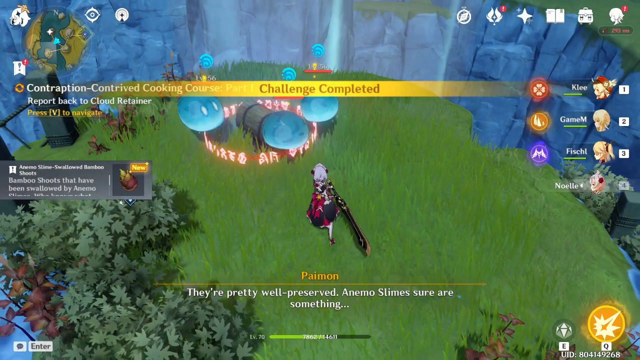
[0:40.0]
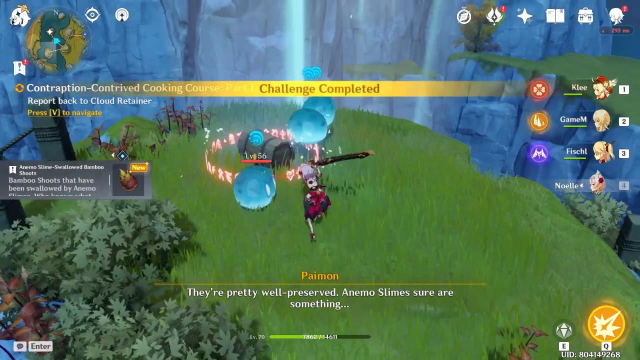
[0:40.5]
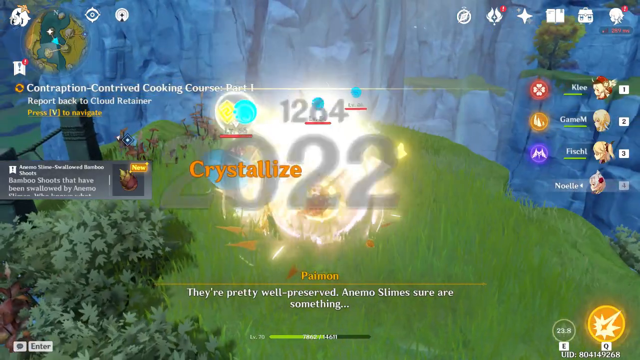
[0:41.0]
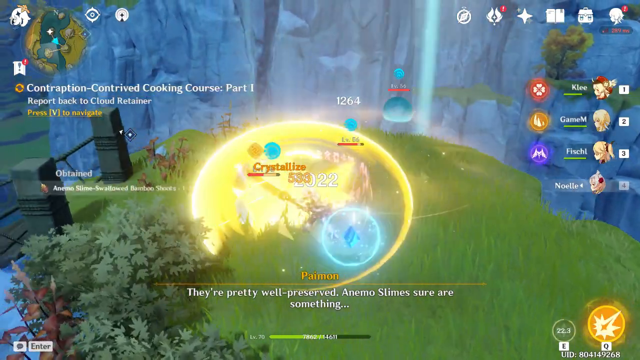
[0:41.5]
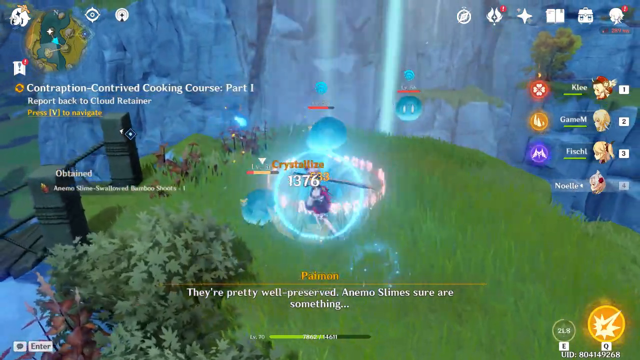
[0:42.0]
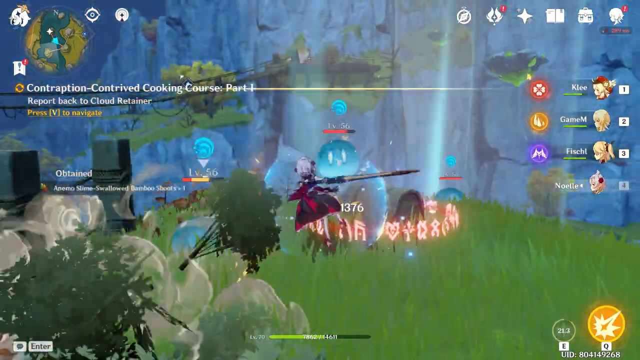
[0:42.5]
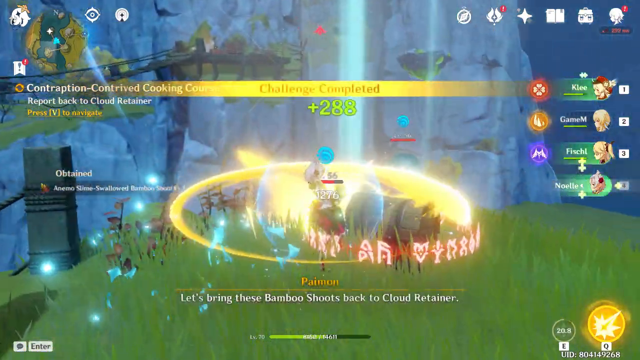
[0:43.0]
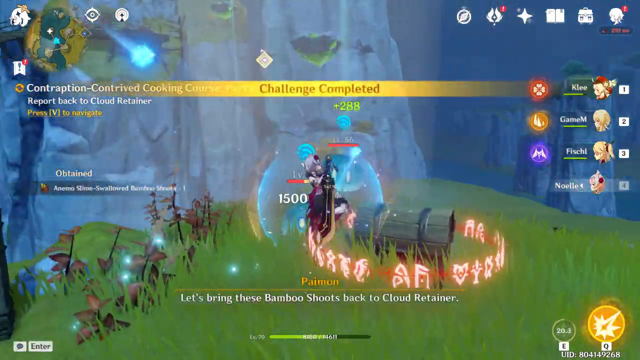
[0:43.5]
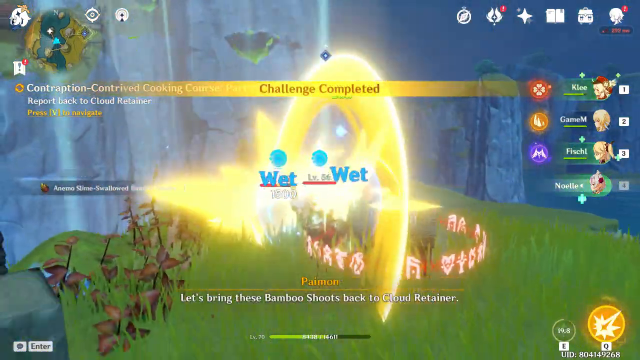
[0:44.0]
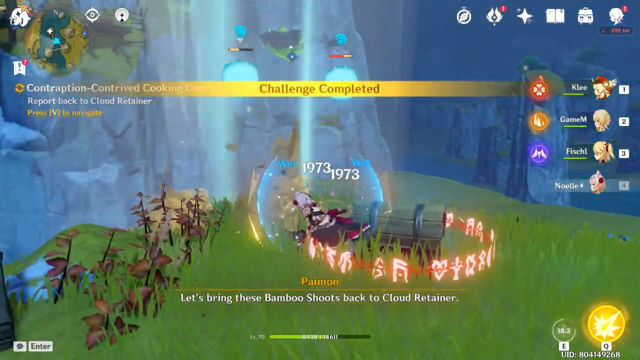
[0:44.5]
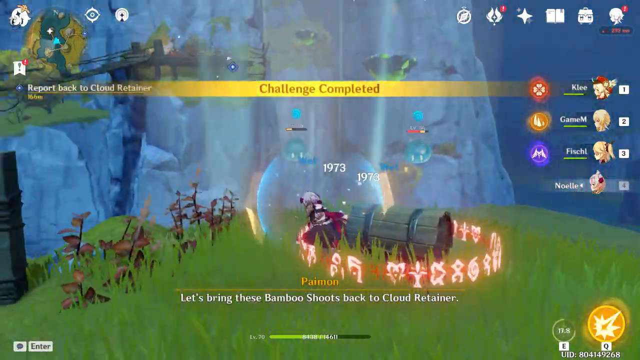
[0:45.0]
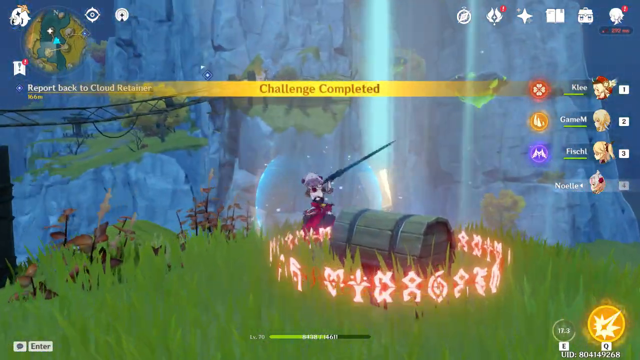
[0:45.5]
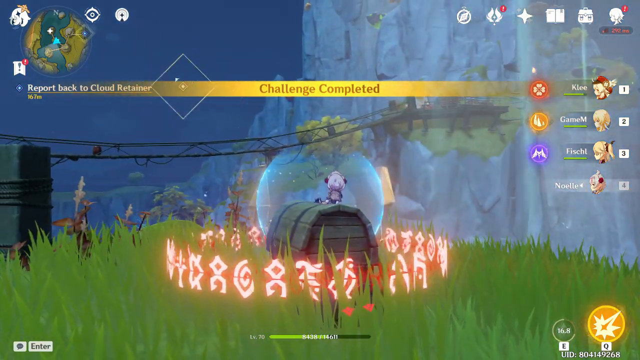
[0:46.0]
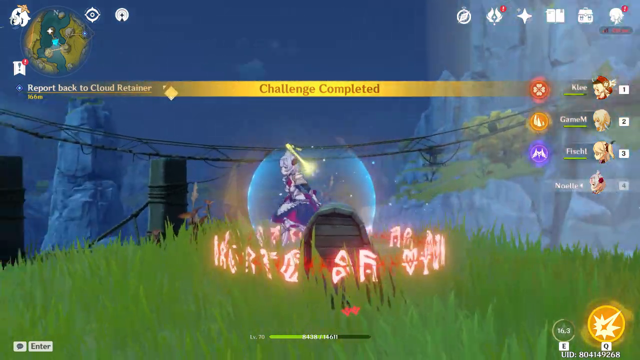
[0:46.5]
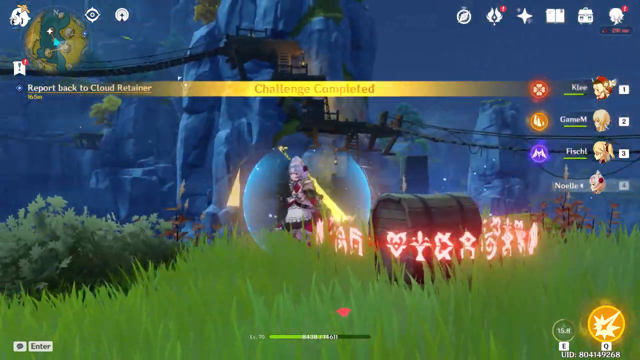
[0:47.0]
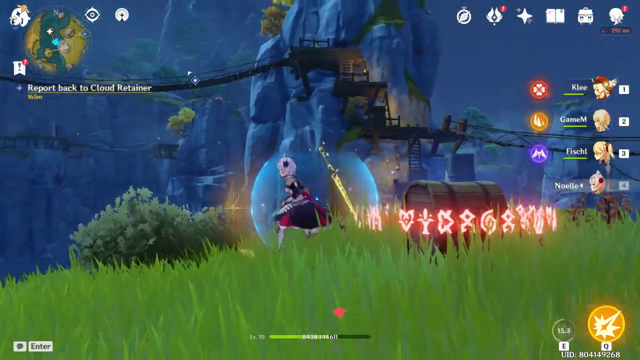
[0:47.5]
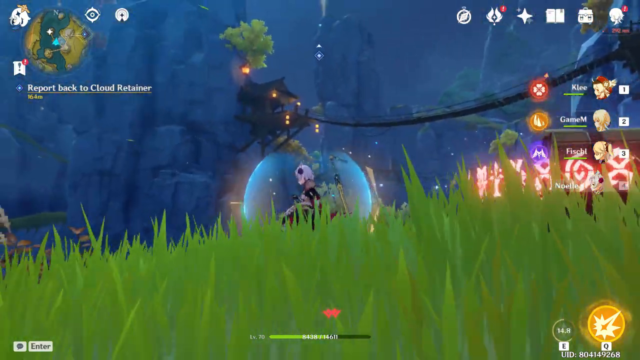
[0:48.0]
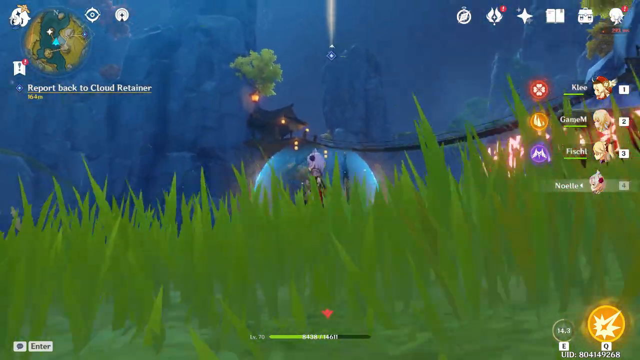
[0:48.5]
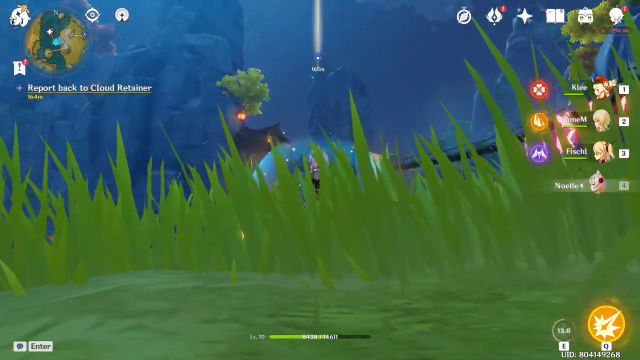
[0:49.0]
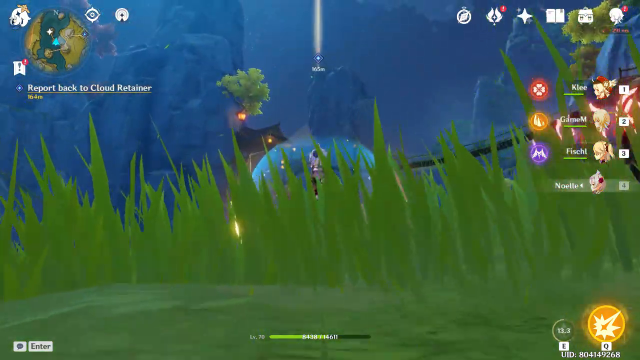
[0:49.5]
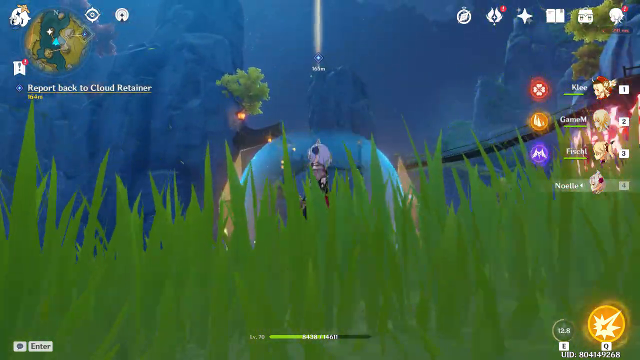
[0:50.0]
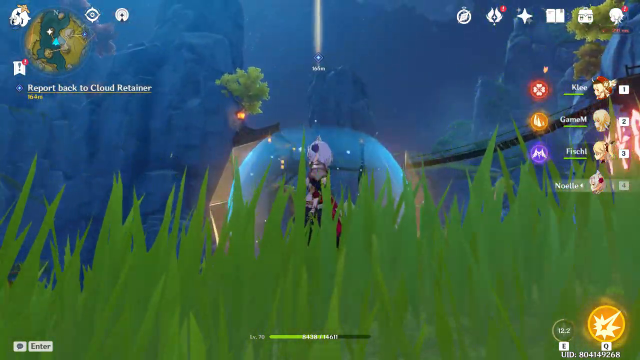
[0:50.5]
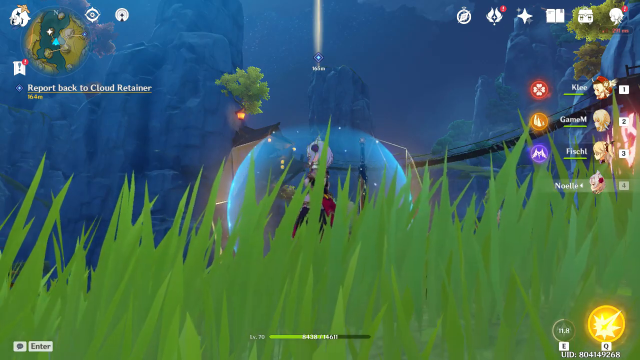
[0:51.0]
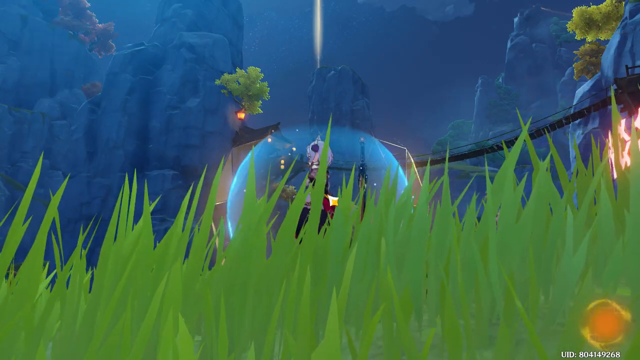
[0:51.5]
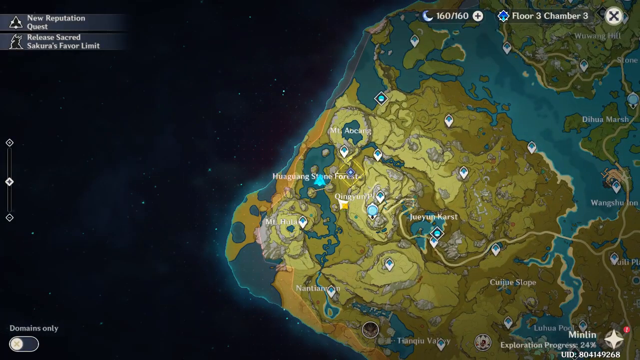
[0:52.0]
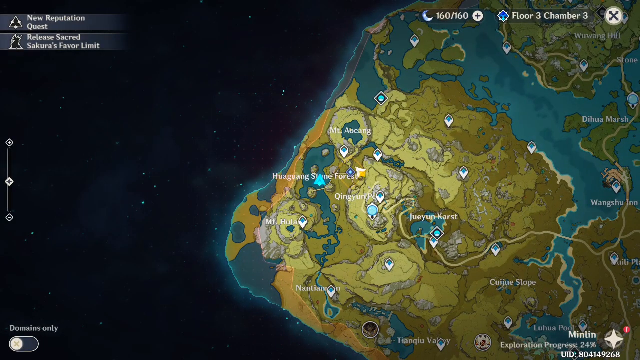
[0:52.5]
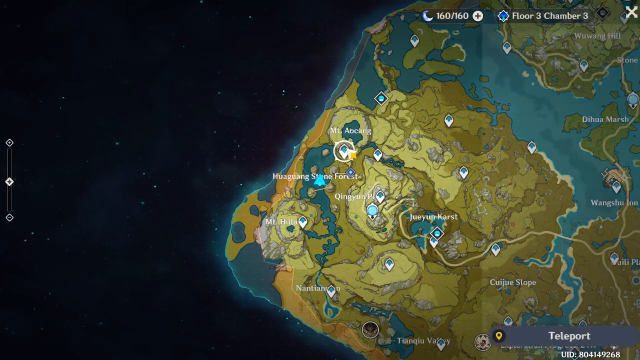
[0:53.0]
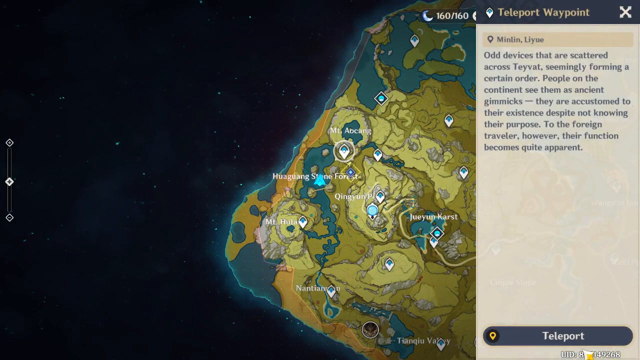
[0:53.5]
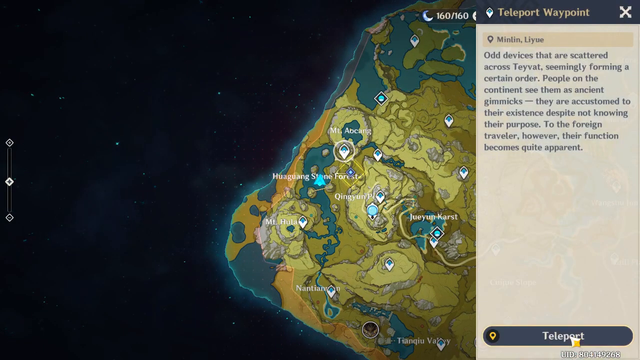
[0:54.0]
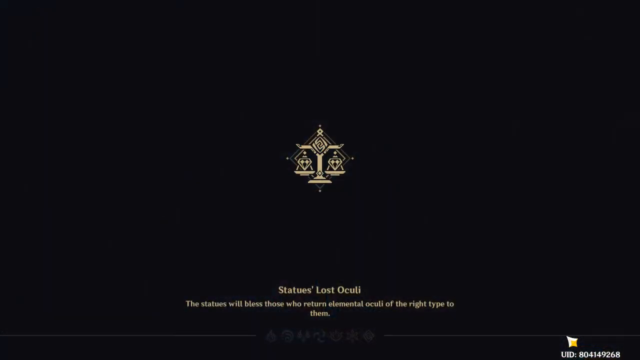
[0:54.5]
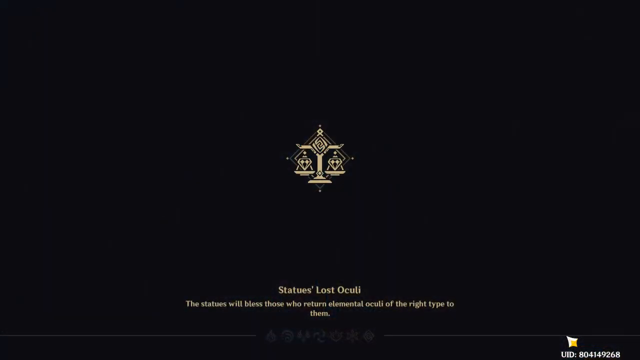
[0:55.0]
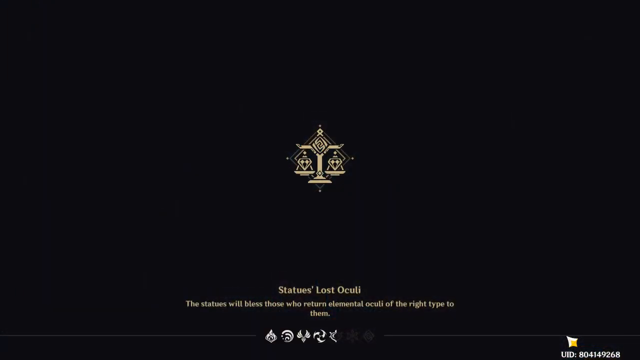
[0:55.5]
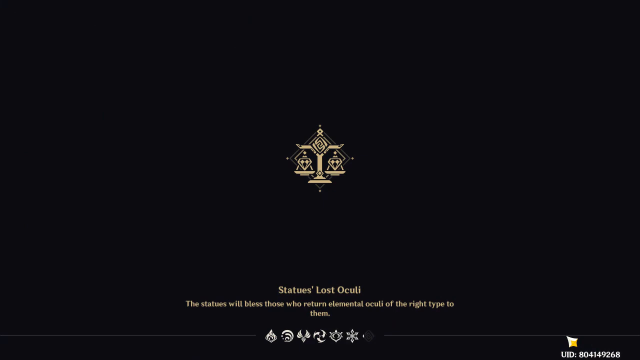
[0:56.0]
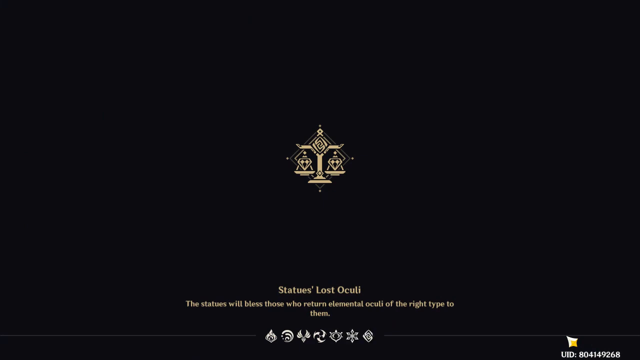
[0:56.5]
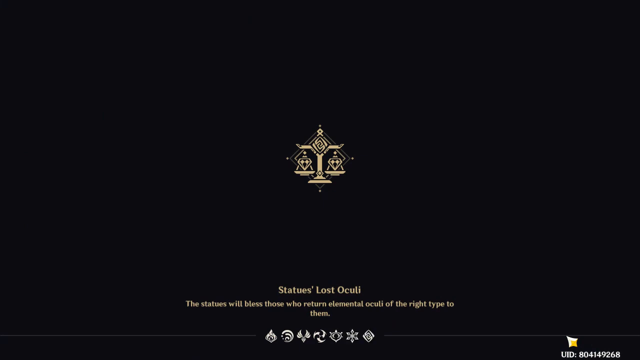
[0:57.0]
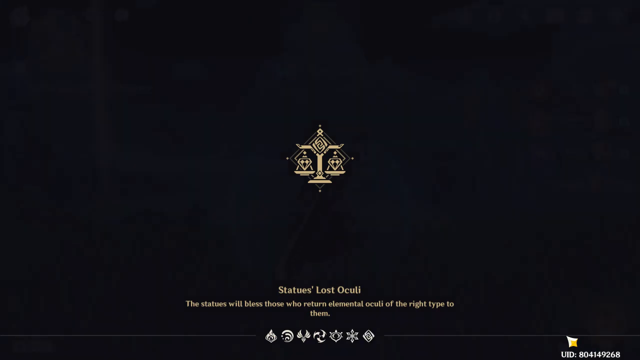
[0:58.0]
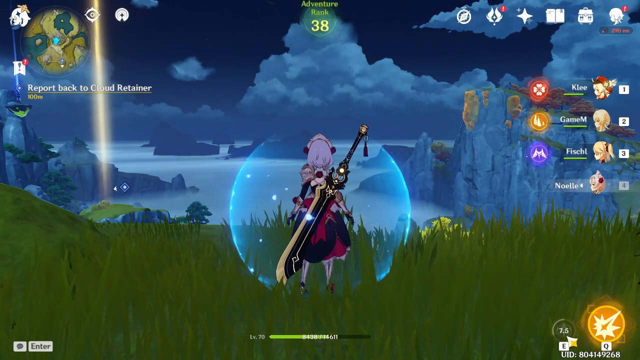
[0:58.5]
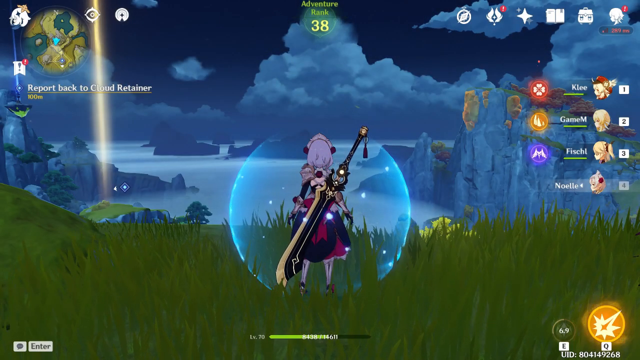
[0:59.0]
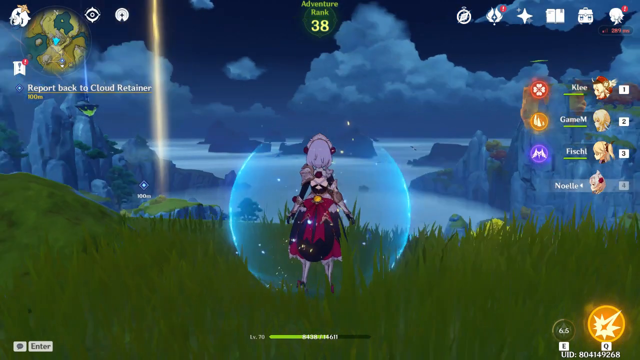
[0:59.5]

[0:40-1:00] A treasure chest is in the middle with some magical runes around it. The view pulls out to a map, apparently to show where she is going. She is collecting bamboo shoots to report back to the Cloud Retainer, probably for a magical potion or a spell. She has a bubble around her, presumably a shield of some sort, and uses a big sword she carries on her back to fight the amino slimes. A status reads "will bless those who turn the elemental oculi back to the people", apparently the quest she is working on. She is still on the grassy knoll. In the background there seems to be a light shooting up into the sky.